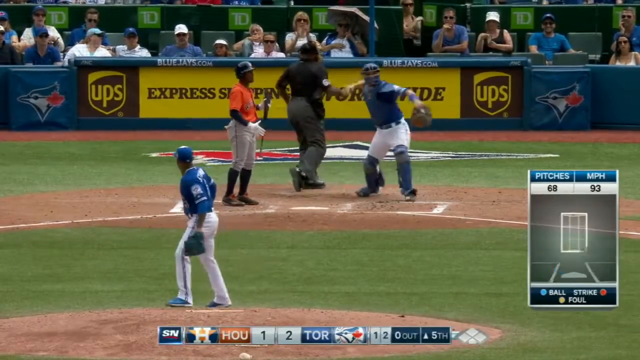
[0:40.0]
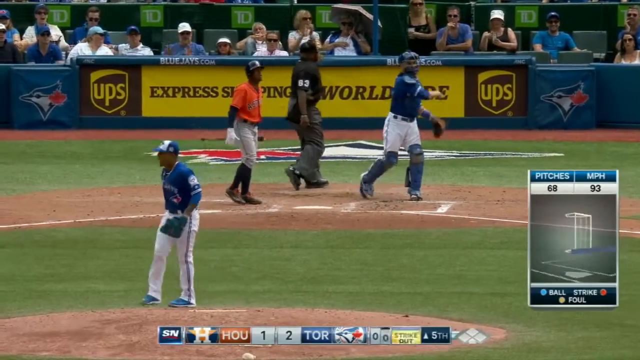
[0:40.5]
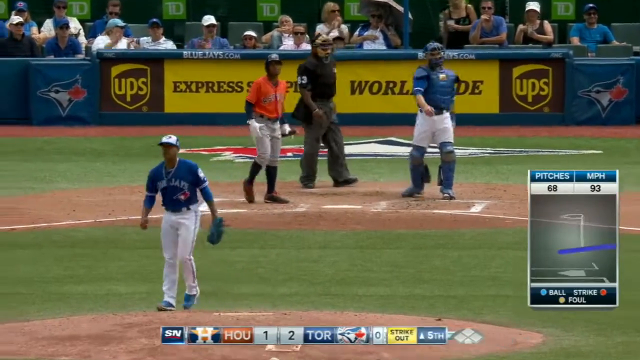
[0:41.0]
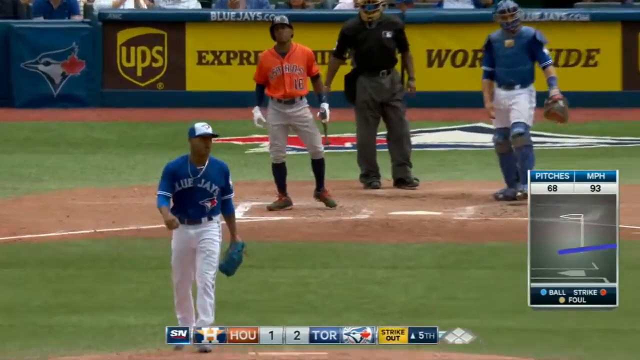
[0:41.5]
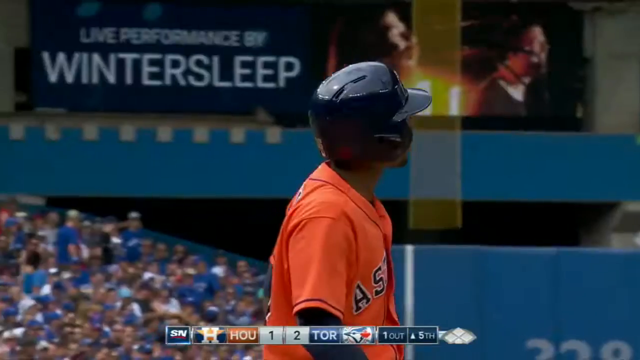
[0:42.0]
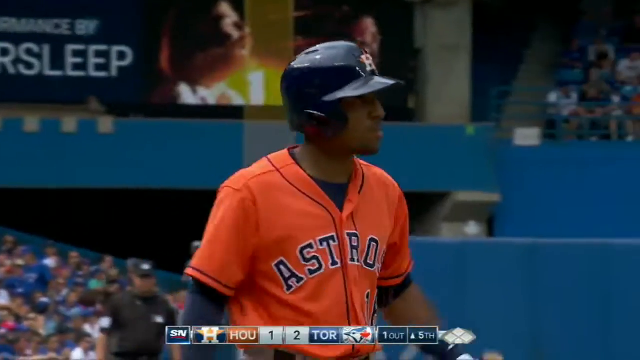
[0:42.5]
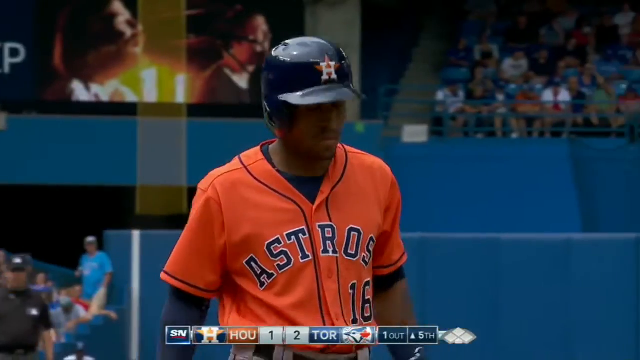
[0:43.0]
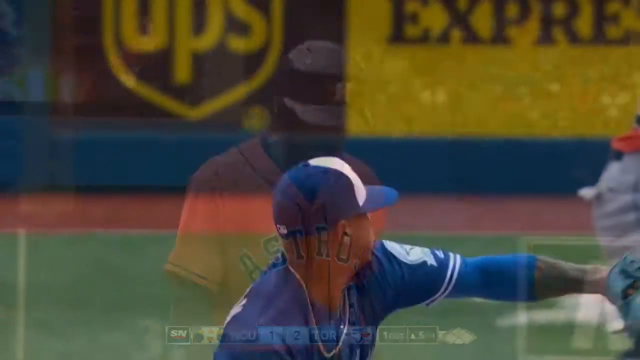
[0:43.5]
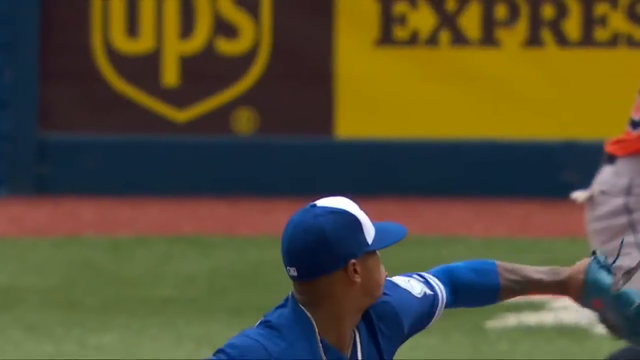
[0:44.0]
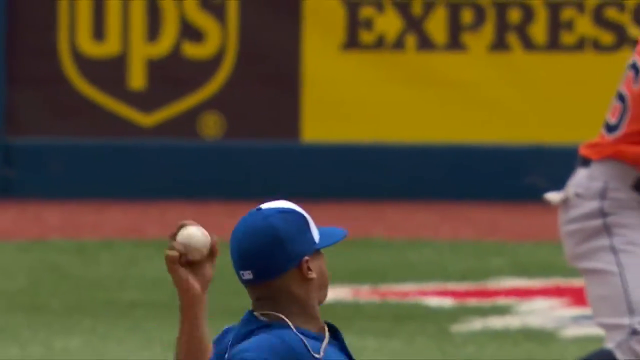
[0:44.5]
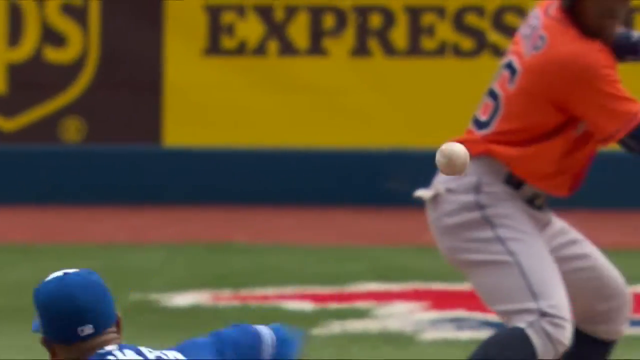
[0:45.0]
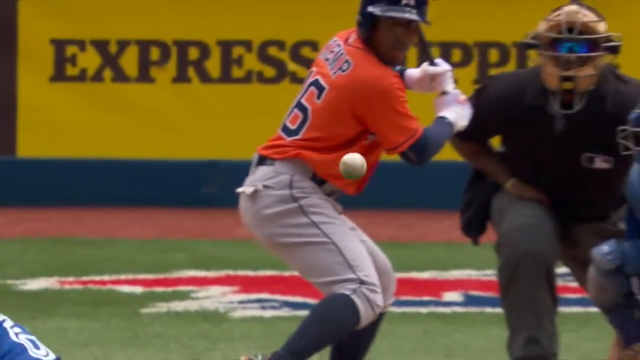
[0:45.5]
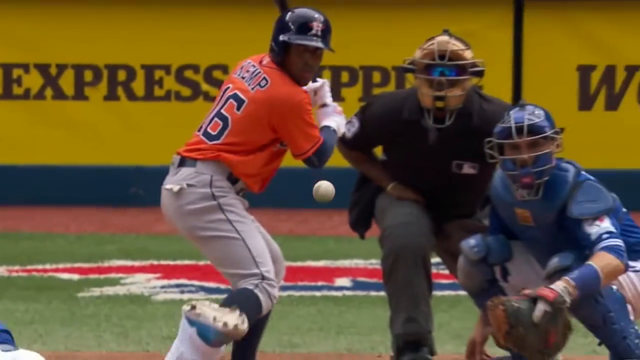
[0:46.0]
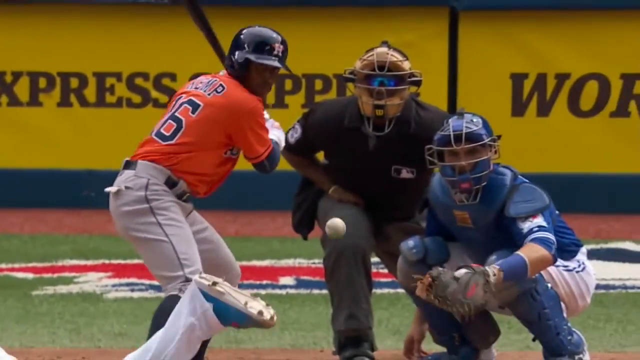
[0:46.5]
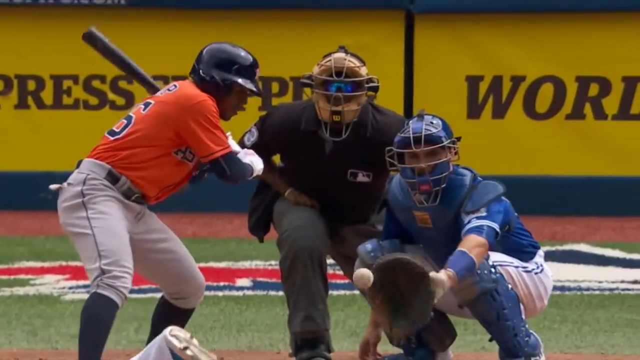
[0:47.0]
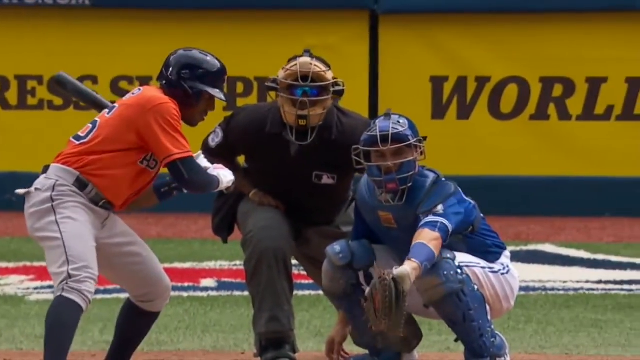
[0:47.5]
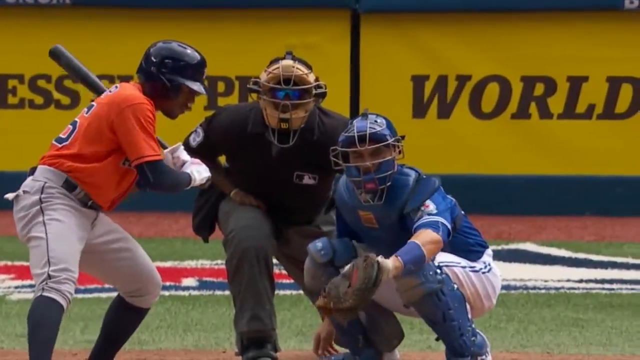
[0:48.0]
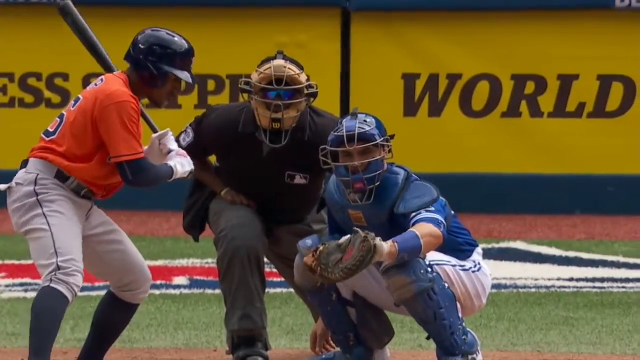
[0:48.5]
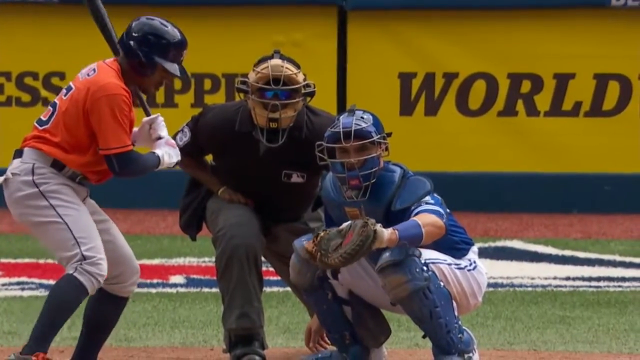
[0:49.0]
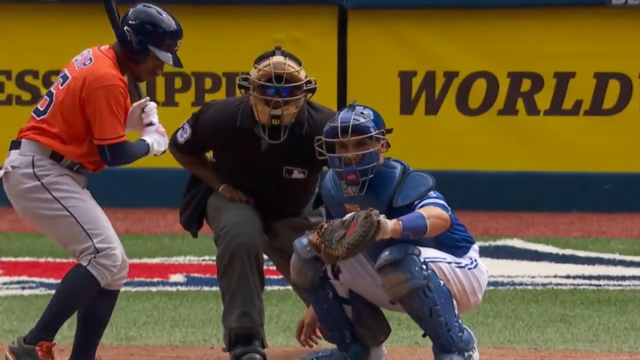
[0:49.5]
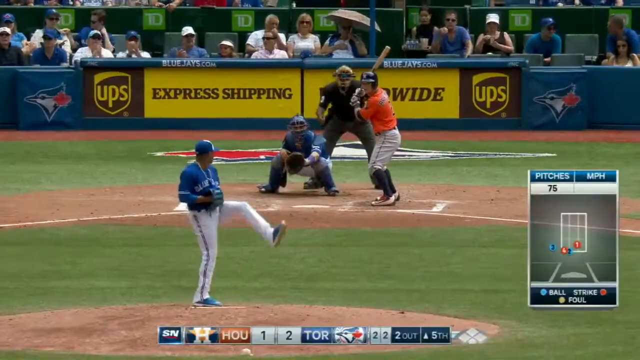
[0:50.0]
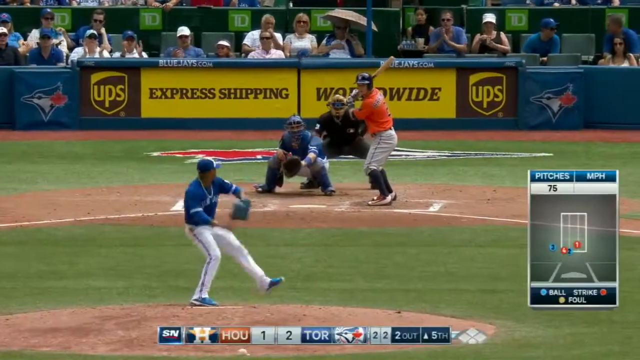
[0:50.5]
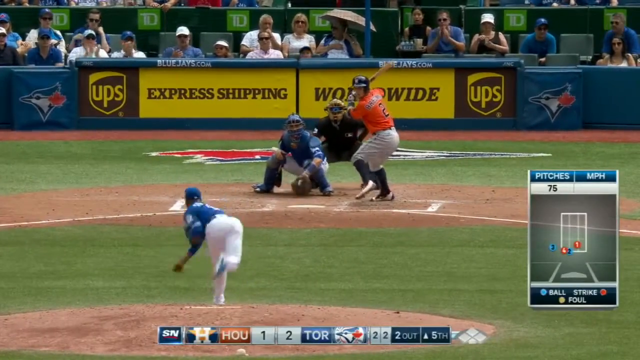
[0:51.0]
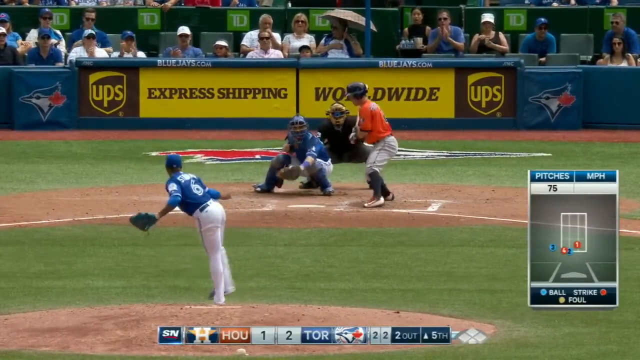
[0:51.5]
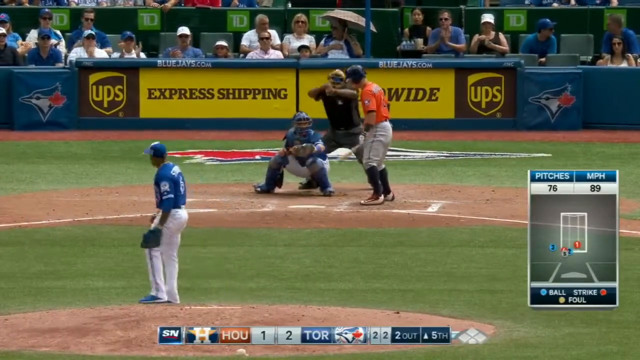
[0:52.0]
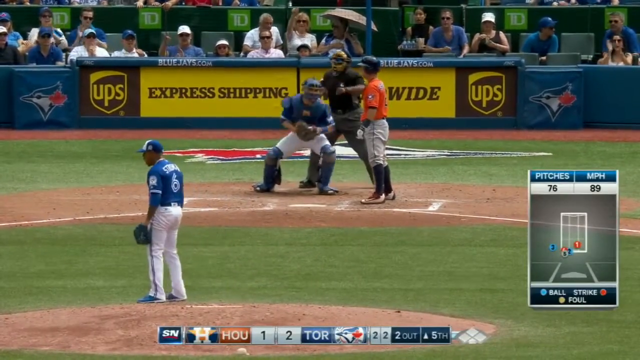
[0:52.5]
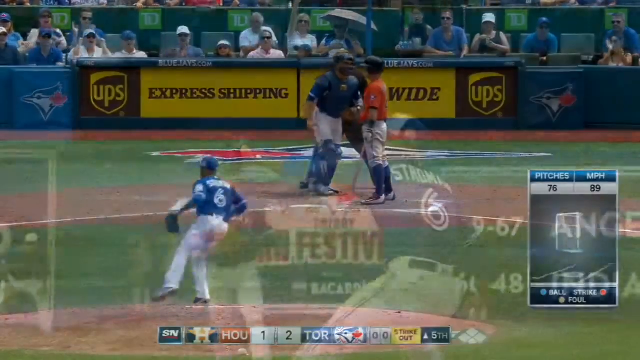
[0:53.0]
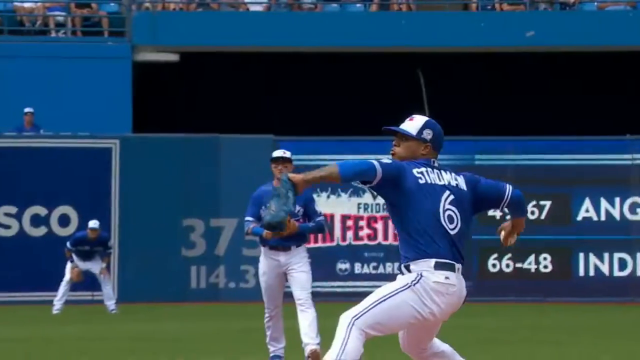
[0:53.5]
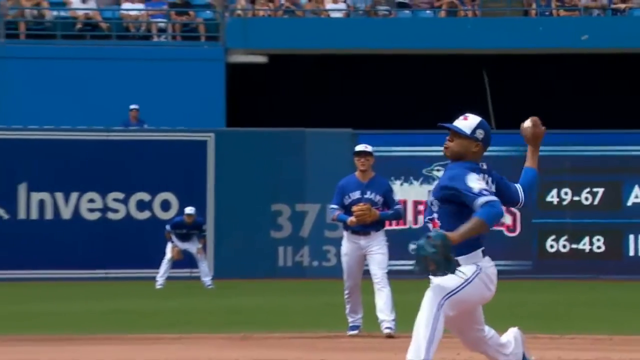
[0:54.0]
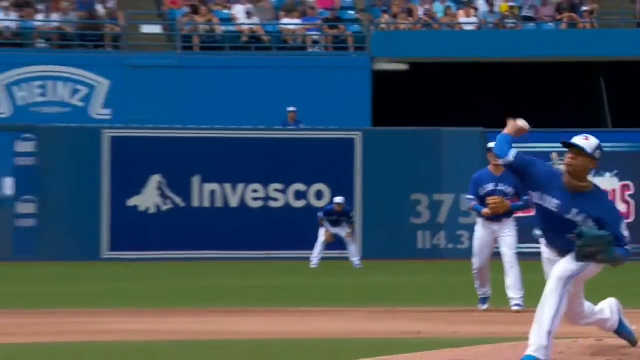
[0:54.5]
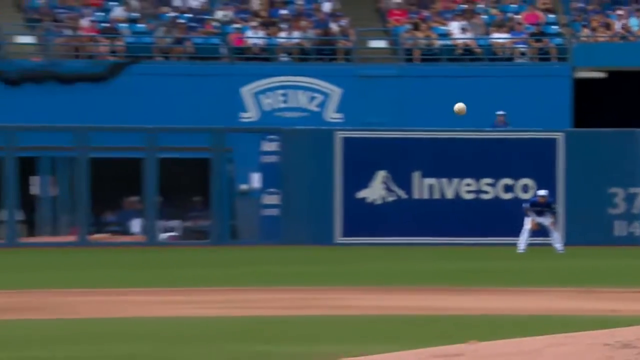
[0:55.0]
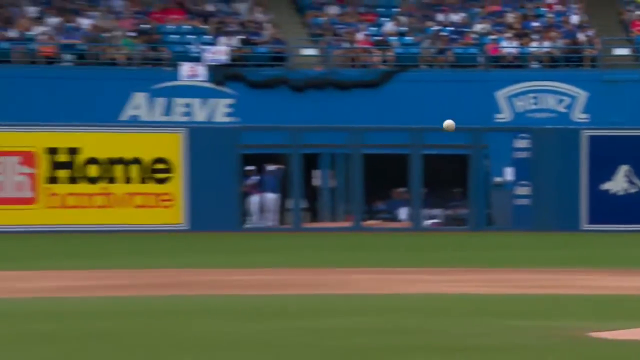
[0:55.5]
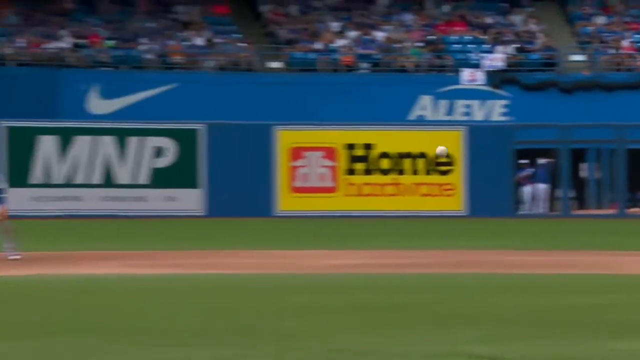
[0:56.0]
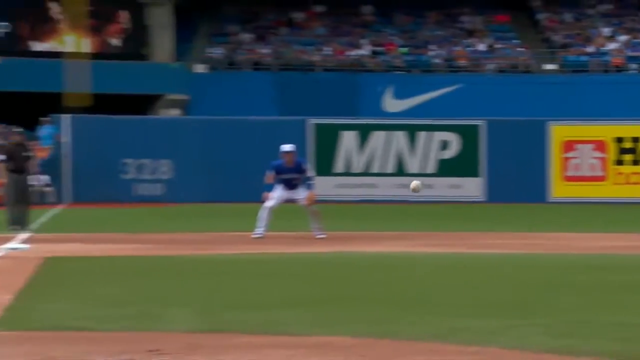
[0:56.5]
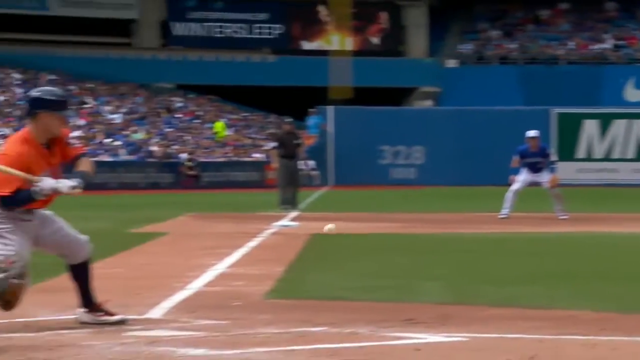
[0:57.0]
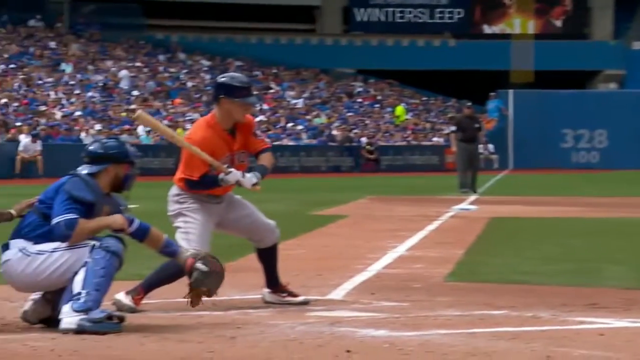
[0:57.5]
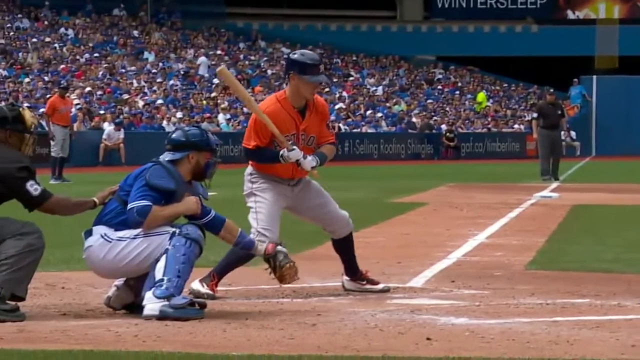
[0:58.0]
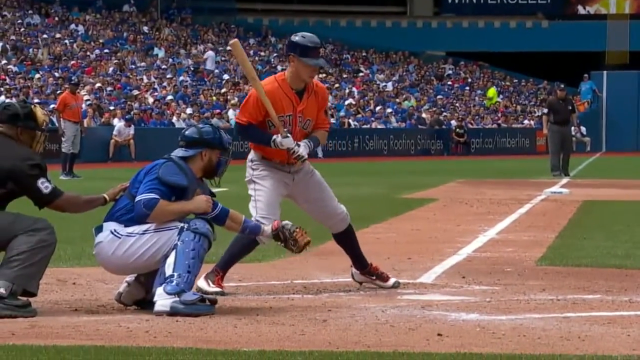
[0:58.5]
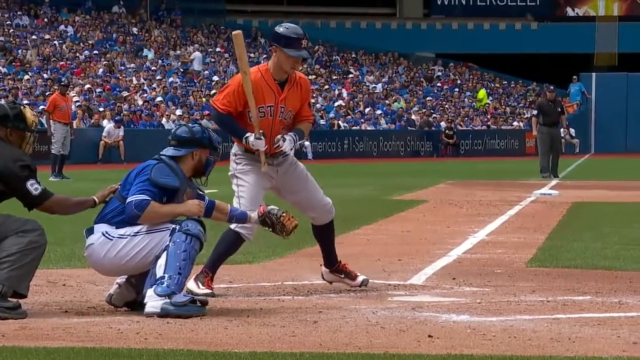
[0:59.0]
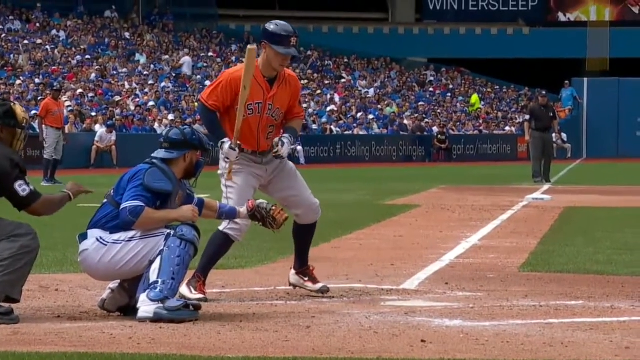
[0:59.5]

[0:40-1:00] The Blue Jays pitcher keeps striking people out. Sponsors appear on the barricade in the background, one of them UPS, and yellow text begins with "express". The Blue Jays barricade is blue. Many people are in the crowd. The latest pitch was 93 miles an hour. A close-up and a slow-motion replay show the pitch on which a darker-skinned player is struck out, followed by another Astros player, a right-handed batter, being struck out as the pitch goes right over the plate in slow motion. The score reads 1 to 2, with the Blue Jays at two and the Astros at one. People in the crowd wear sunglasses, white shirts, blue shirts, white hats and blue hats. The Blue Jays uniforms have white pants and blue shirts with "Blue Jays" in white lettering. The Astros wear orange, with "Astros" spelled in black lettering with a white border around the letters.